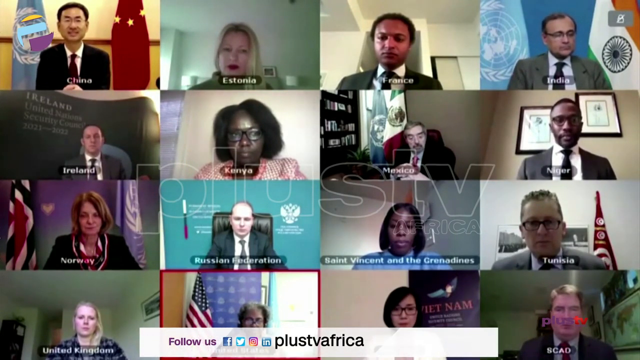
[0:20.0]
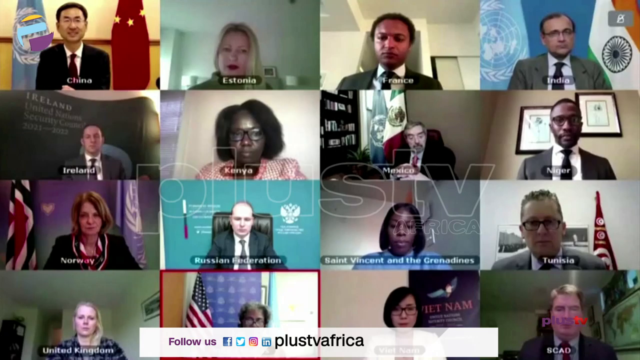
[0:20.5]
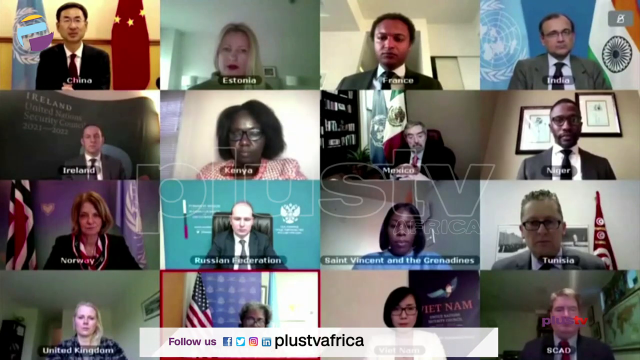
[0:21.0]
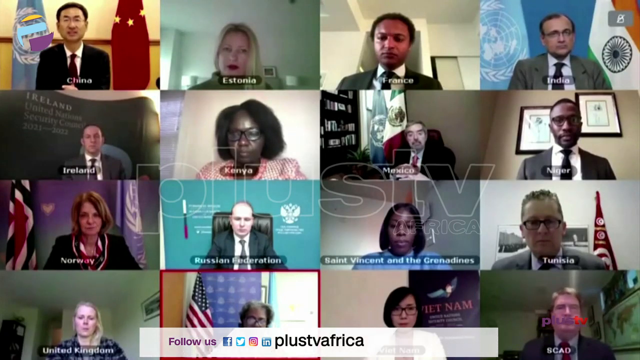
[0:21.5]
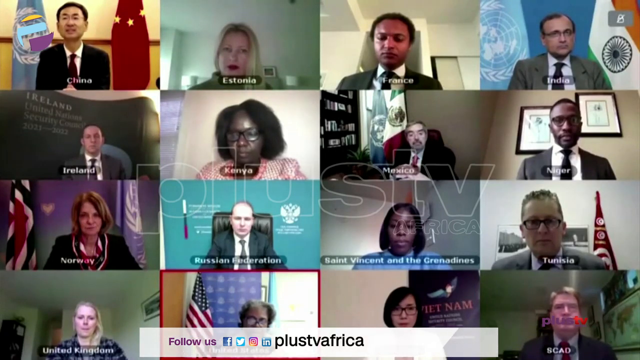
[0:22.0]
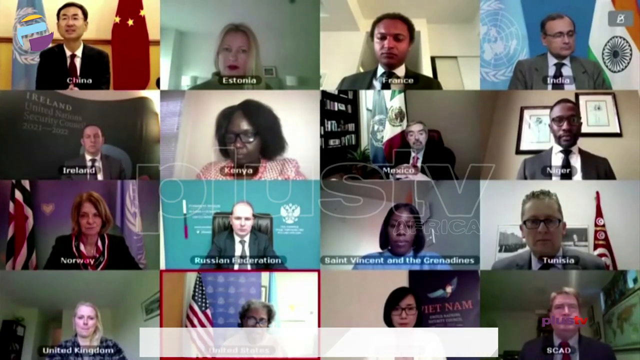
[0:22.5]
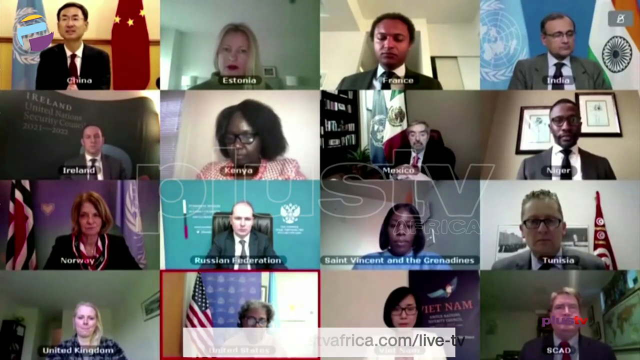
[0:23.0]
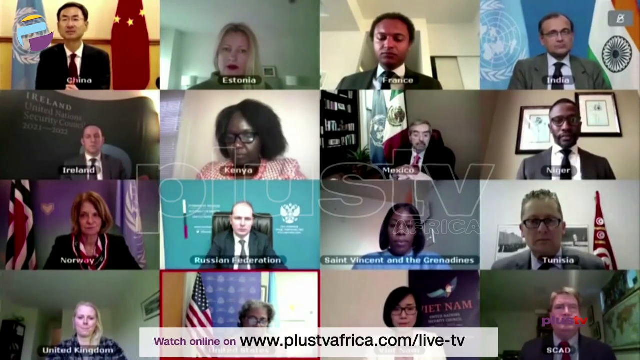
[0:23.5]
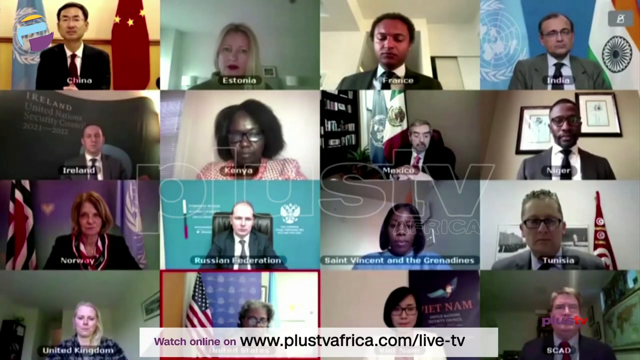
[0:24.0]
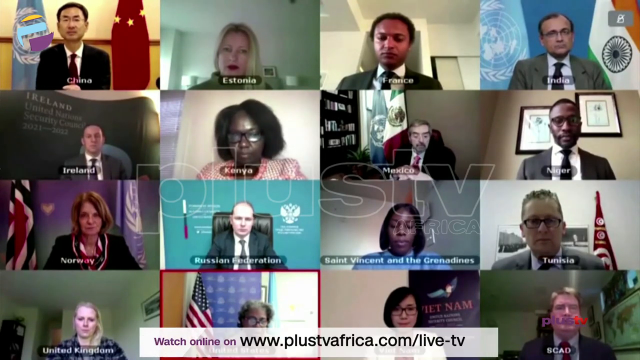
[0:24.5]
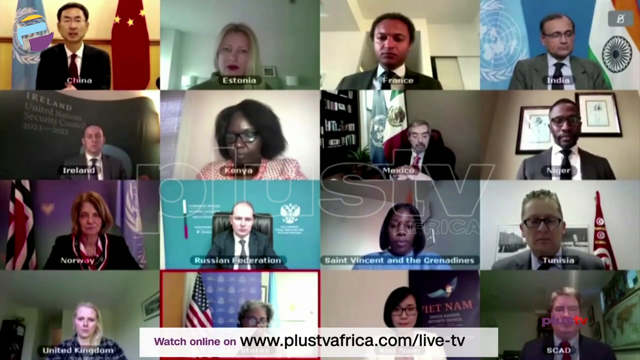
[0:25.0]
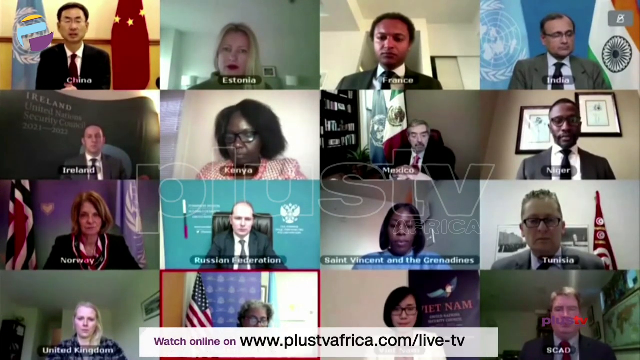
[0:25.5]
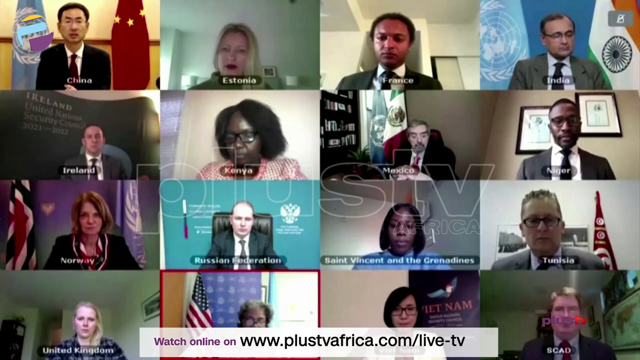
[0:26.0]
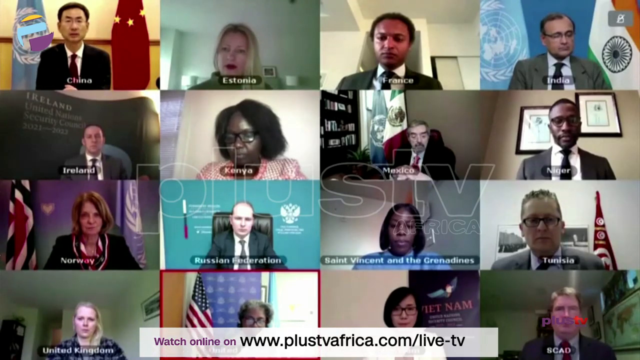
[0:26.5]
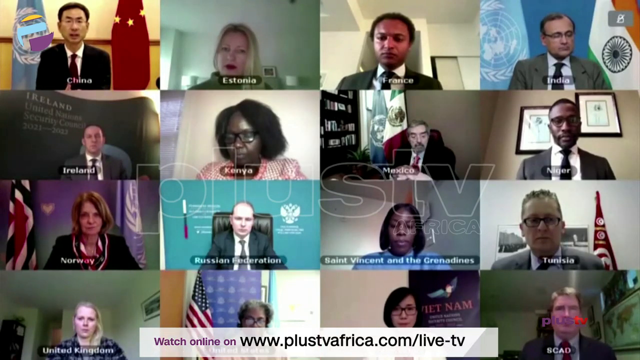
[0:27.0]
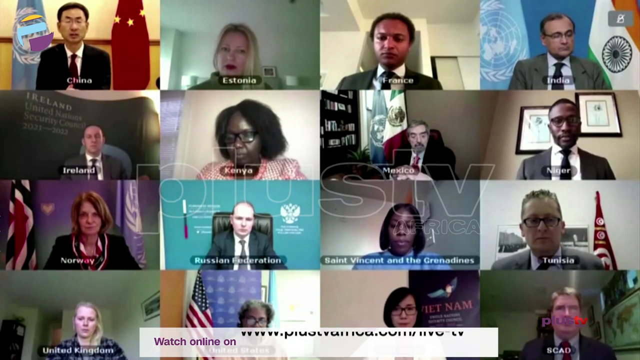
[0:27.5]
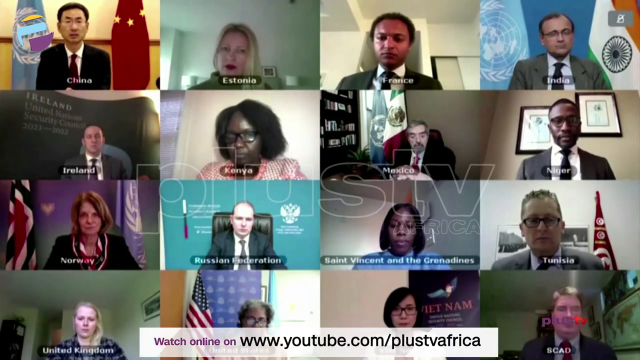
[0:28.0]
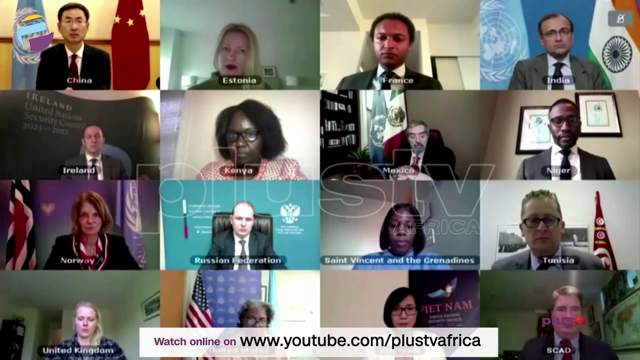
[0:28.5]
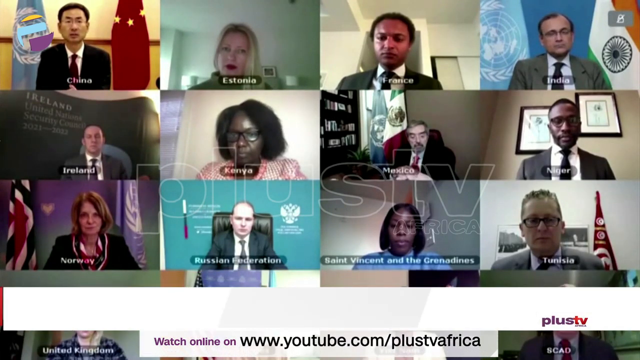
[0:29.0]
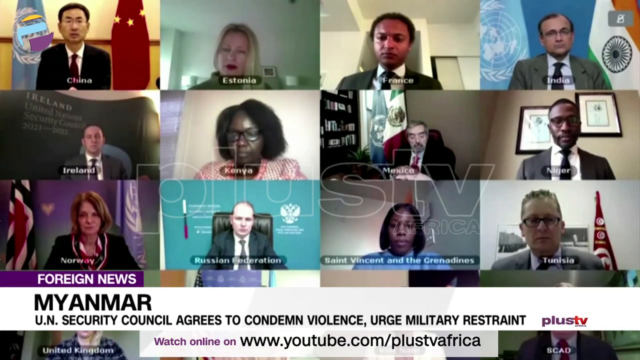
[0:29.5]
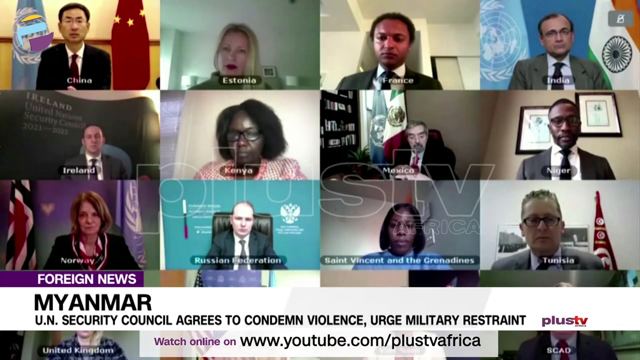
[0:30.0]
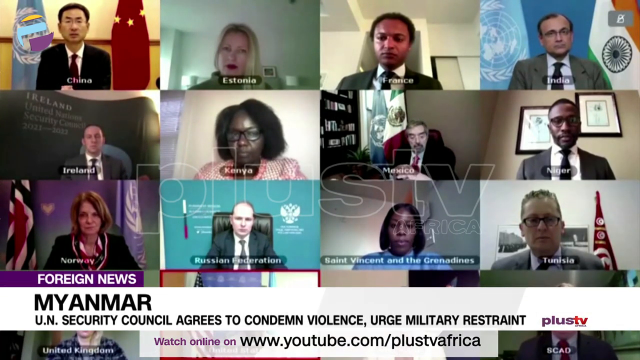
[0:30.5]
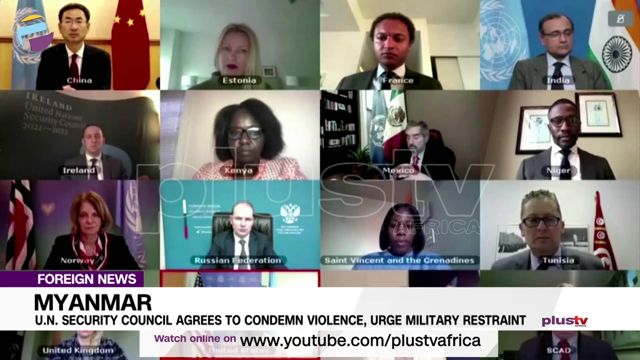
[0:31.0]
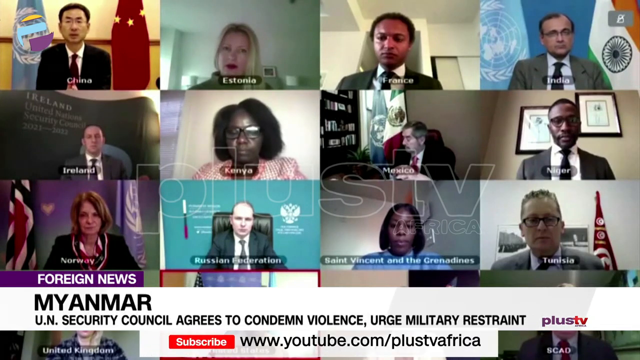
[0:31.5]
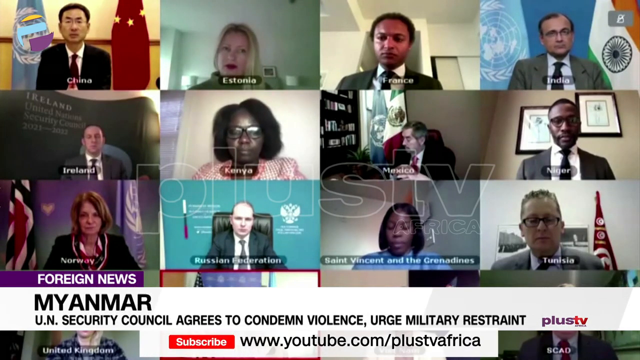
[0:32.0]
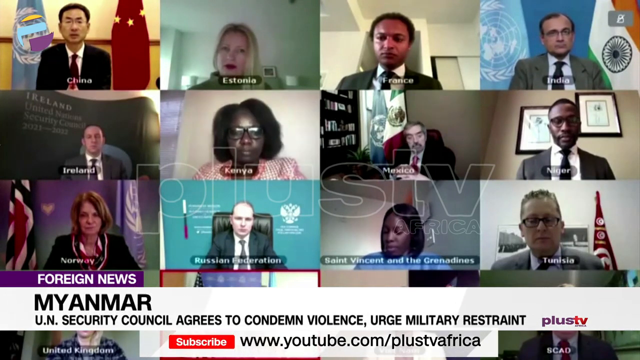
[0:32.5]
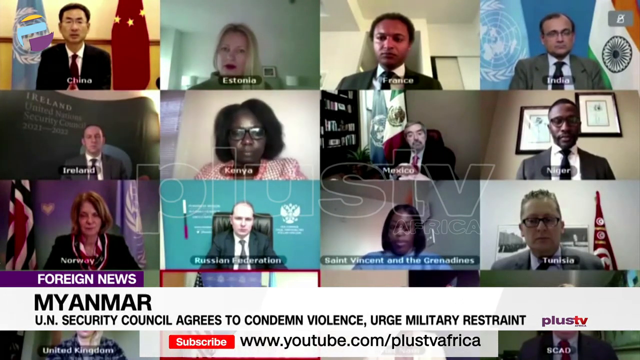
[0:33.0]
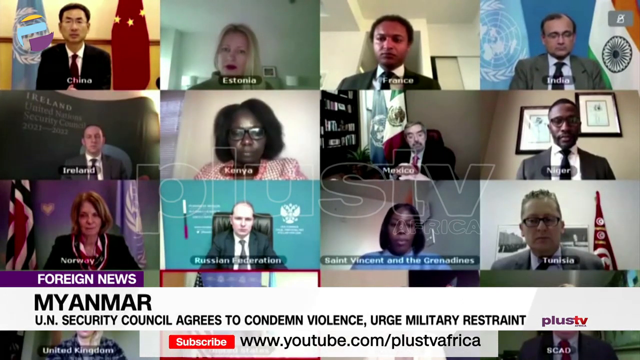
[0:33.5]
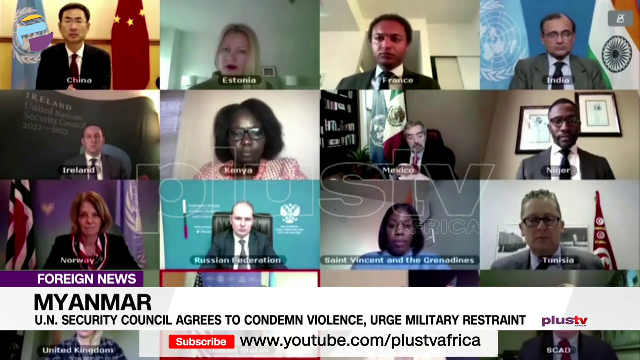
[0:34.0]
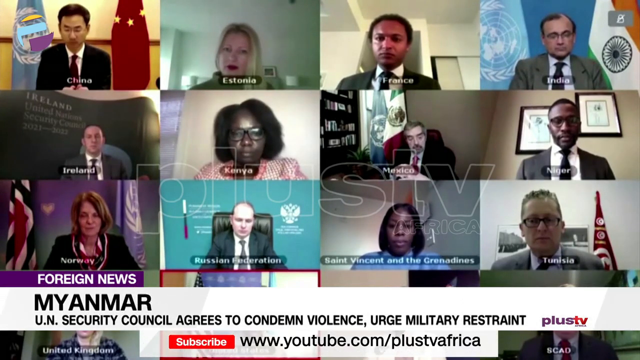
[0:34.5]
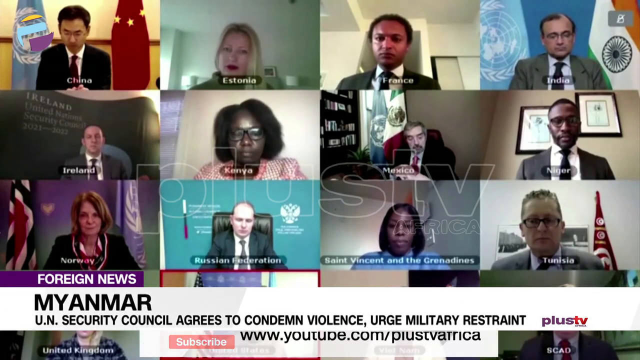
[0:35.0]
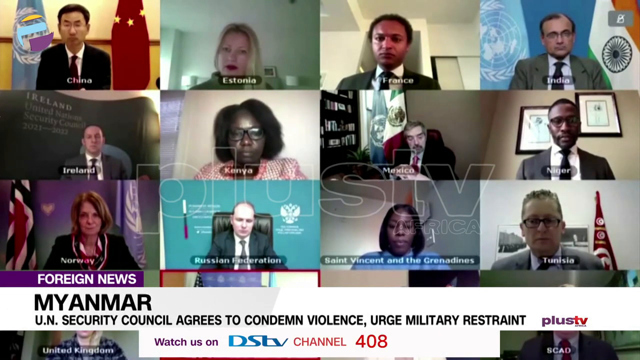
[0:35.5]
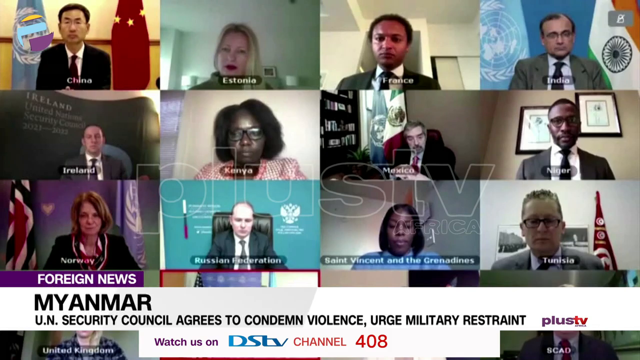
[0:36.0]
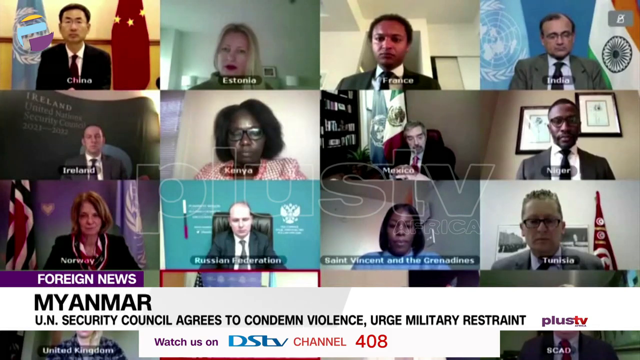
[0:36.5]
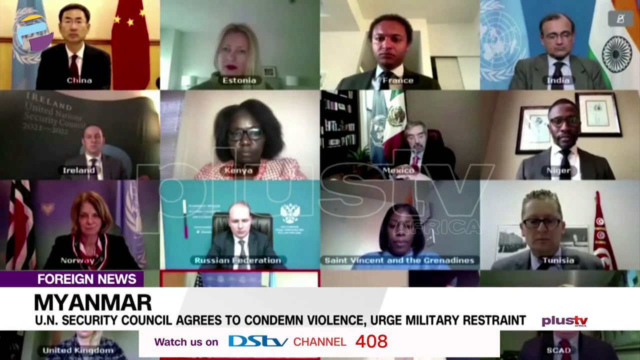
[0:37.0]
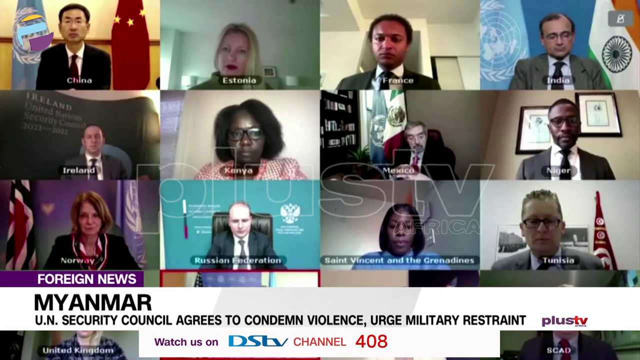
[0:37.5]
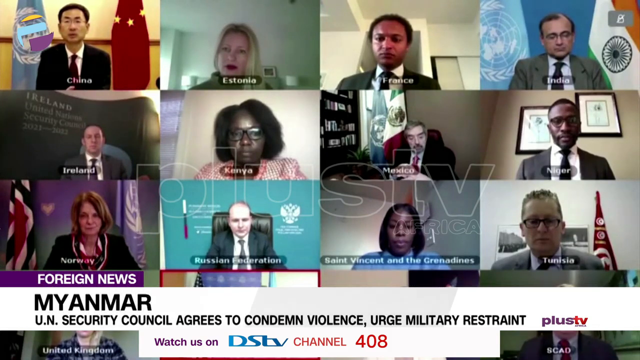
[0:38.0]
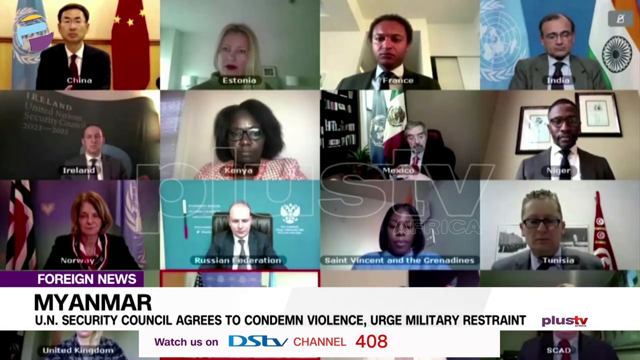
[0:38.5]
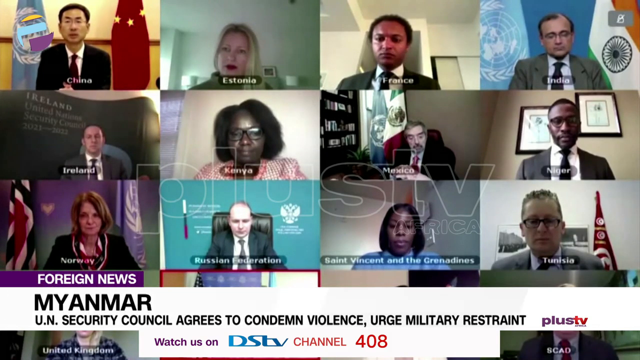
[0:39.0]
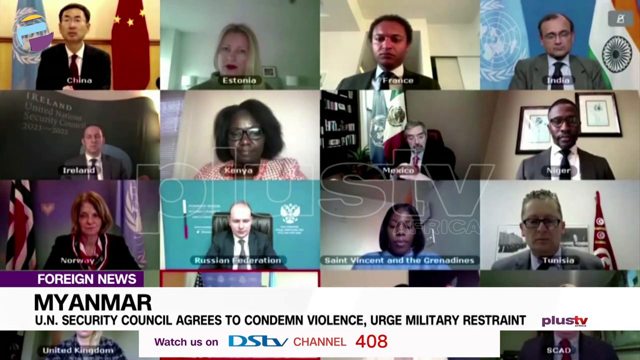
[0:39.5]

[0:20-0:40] A large number of webcams show different people speaking together in some type of group call or video call. There appear to be 16 individuals in total from different countries and districts, with the locations China, Estonia, France, India, Ireland, Kenya, Mexico, Niger, Norway, the Russian Federation, St. Vincent and the Grenadines, Tunisia, the United Kingdom, the United States, SCAD, and Vietnam. Text remains at the bottom prompting the viewer to watch the video online on YouTube, on the channel Plus TV Africa. The foreign news segment on Myanmar continues, with text stating "UN security Council agrees to condemn violence, urge military restraint". The participants appear to be several diplomats or dignitaries from different countries and regions coming together to address a foreign issue.